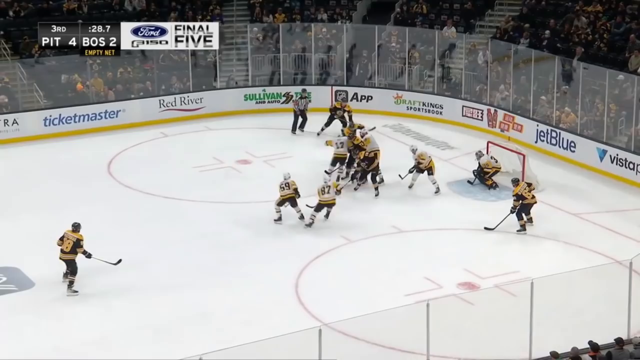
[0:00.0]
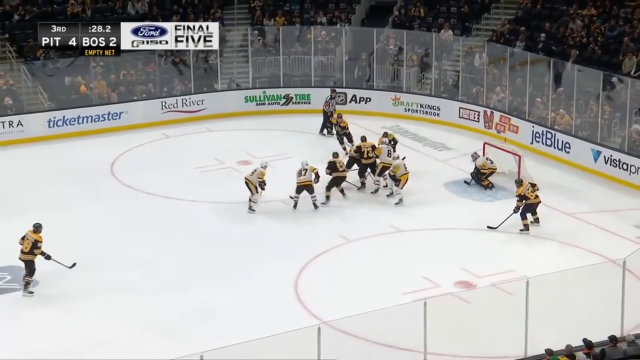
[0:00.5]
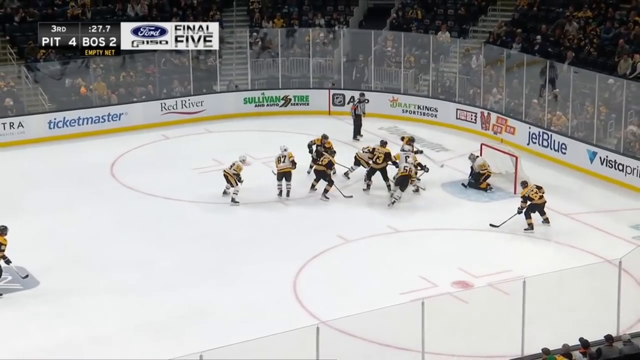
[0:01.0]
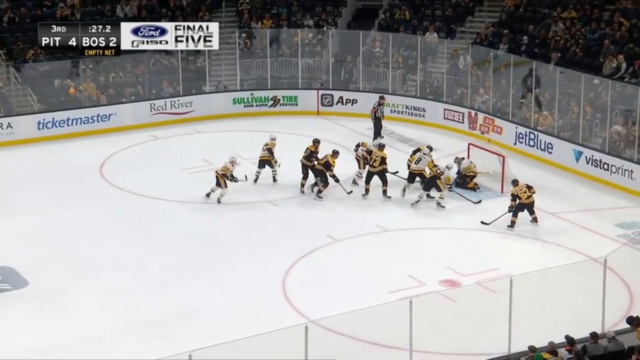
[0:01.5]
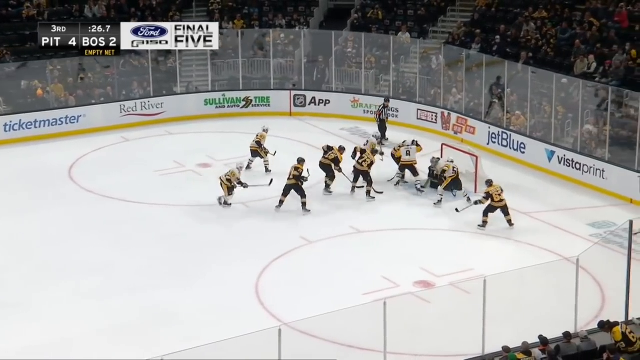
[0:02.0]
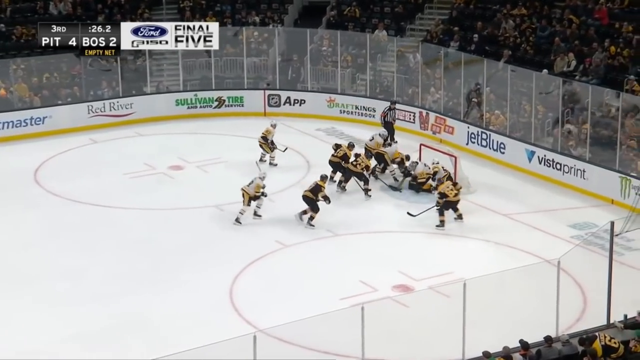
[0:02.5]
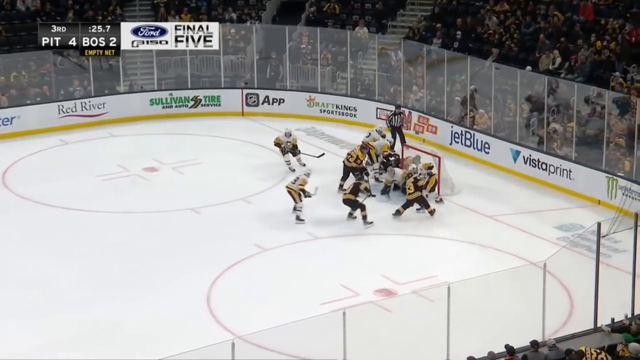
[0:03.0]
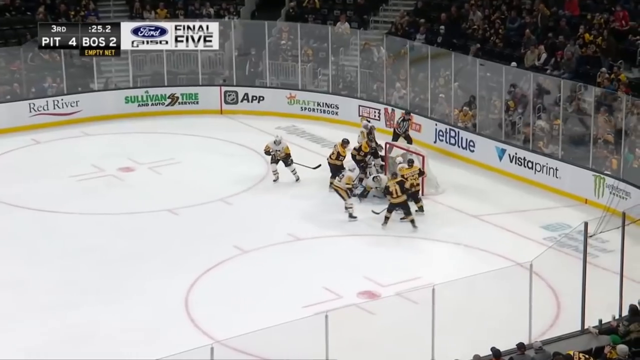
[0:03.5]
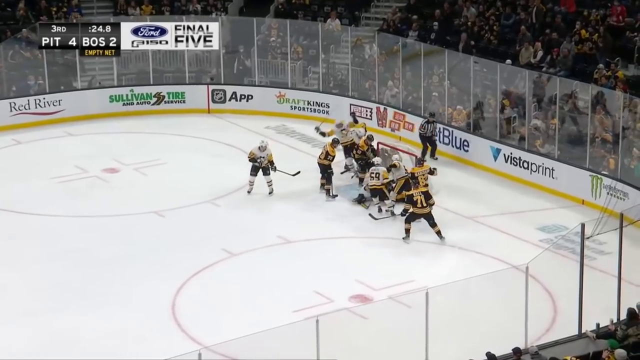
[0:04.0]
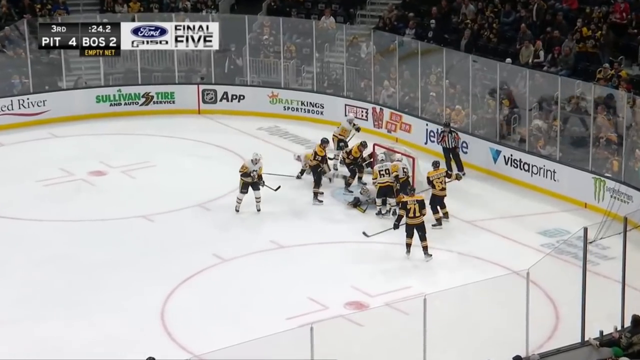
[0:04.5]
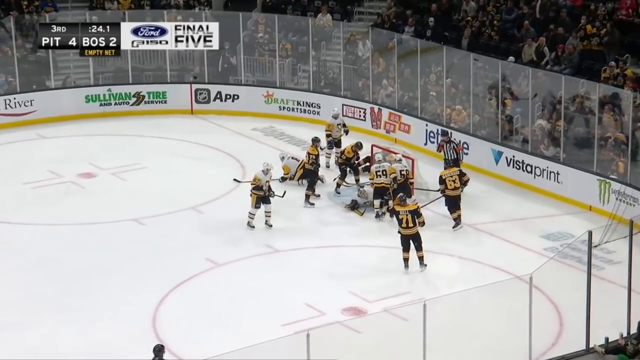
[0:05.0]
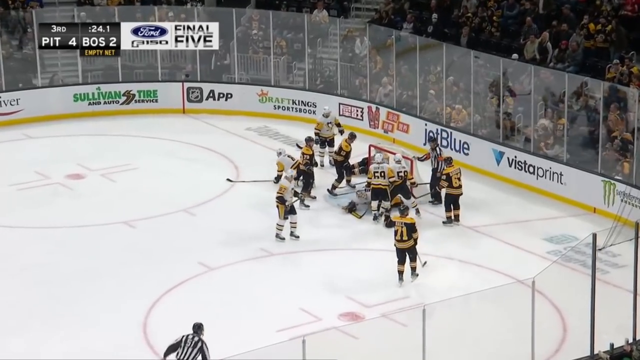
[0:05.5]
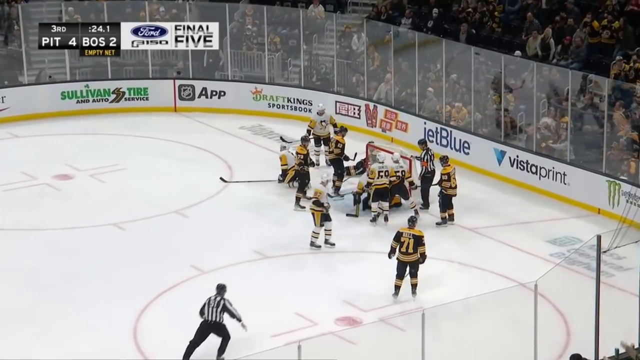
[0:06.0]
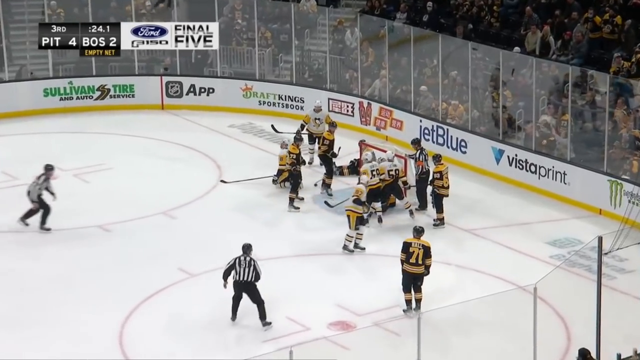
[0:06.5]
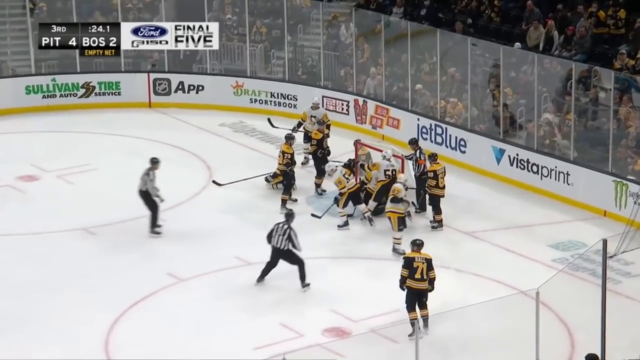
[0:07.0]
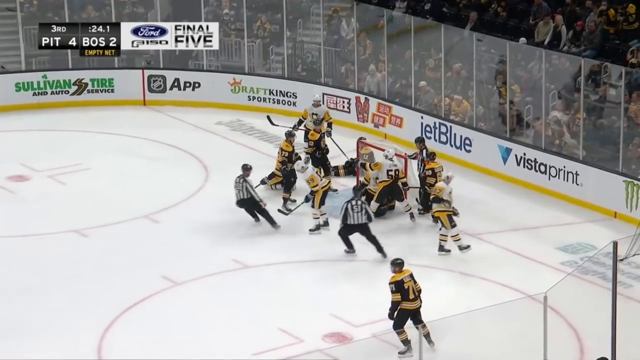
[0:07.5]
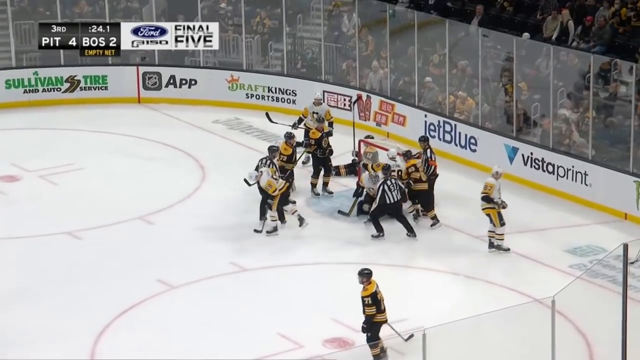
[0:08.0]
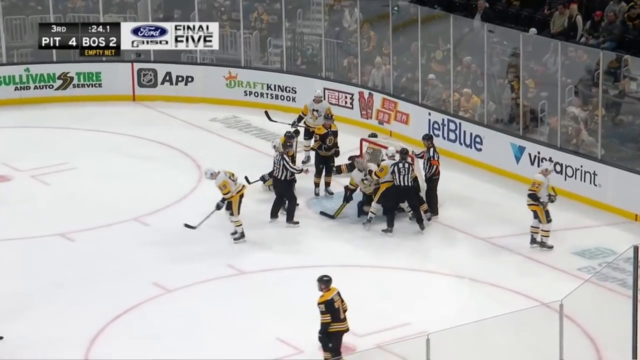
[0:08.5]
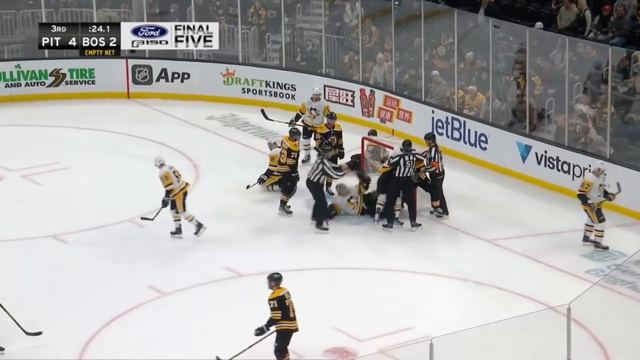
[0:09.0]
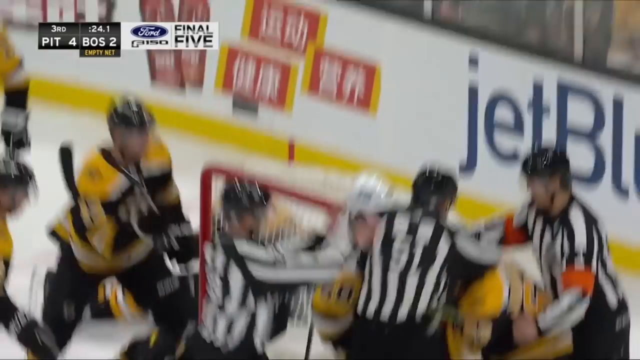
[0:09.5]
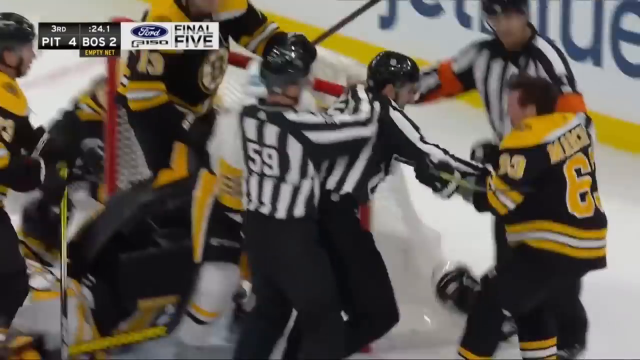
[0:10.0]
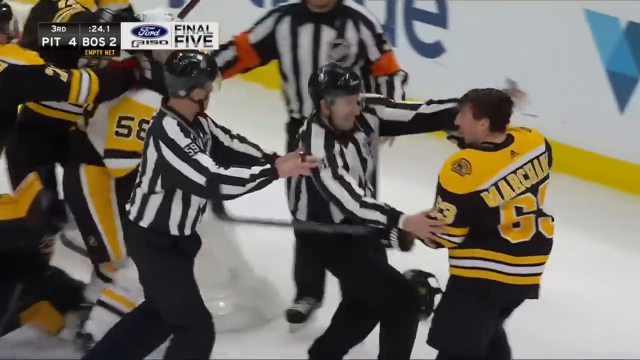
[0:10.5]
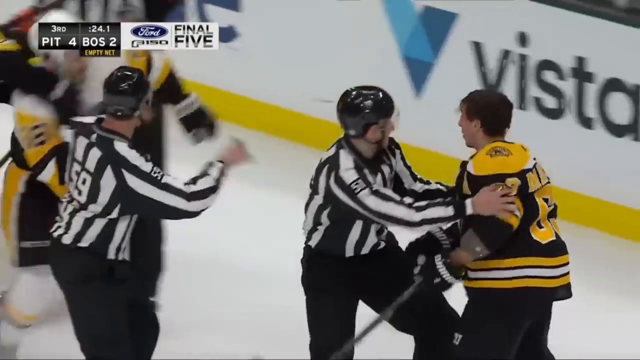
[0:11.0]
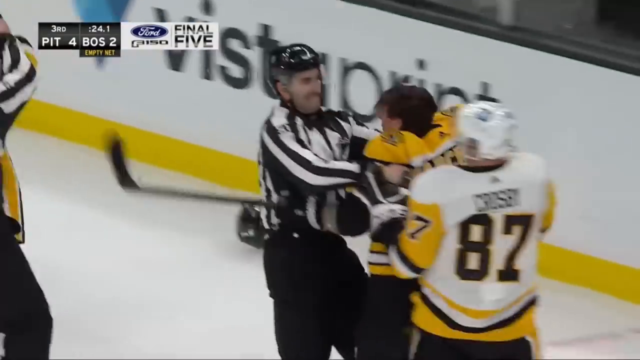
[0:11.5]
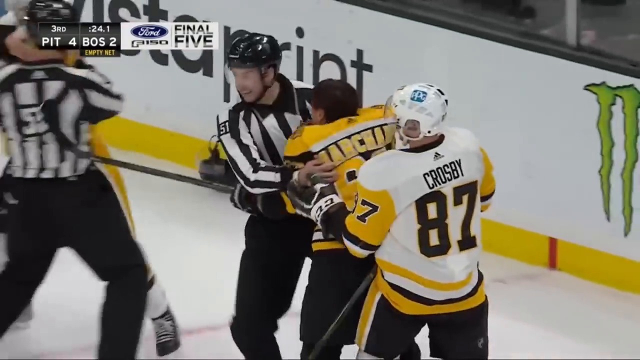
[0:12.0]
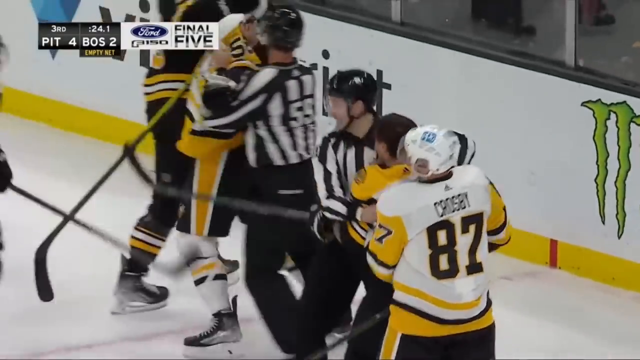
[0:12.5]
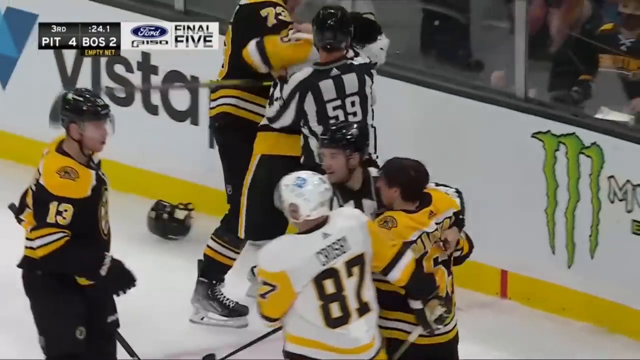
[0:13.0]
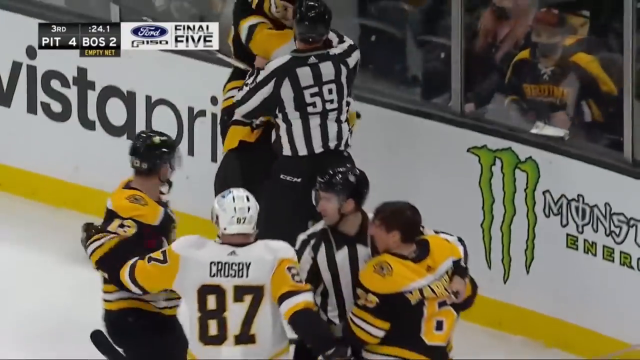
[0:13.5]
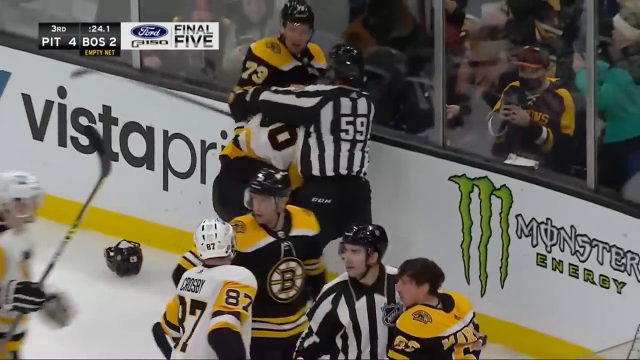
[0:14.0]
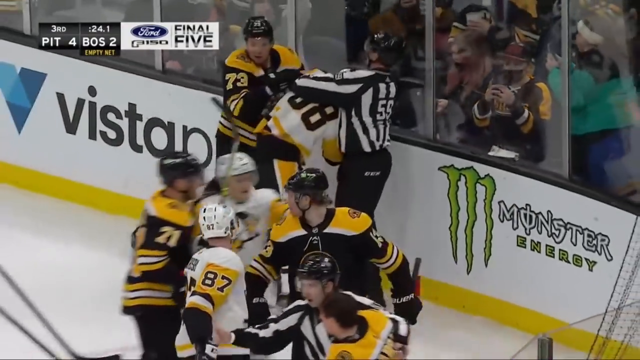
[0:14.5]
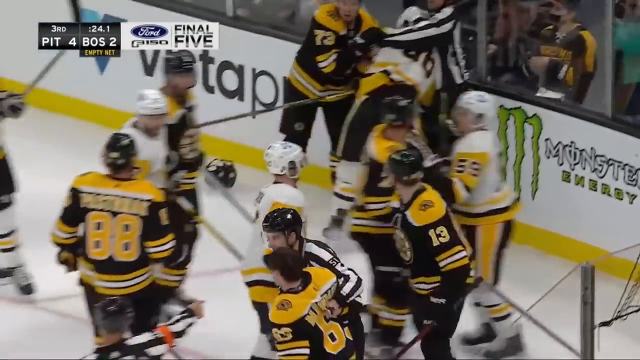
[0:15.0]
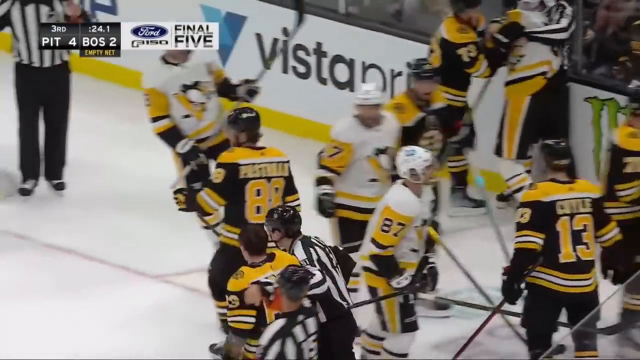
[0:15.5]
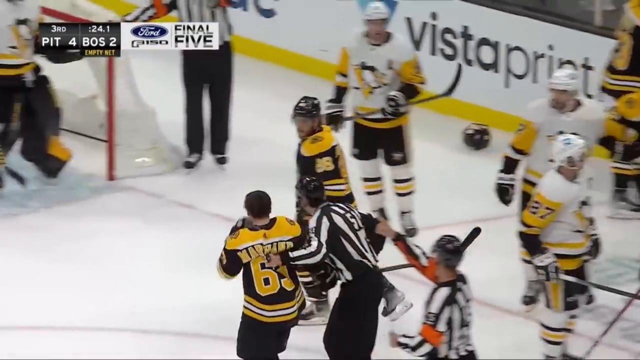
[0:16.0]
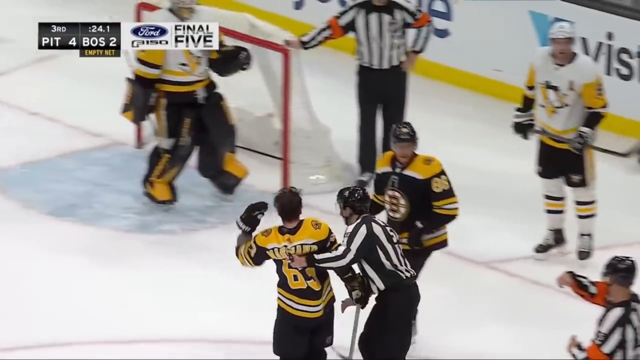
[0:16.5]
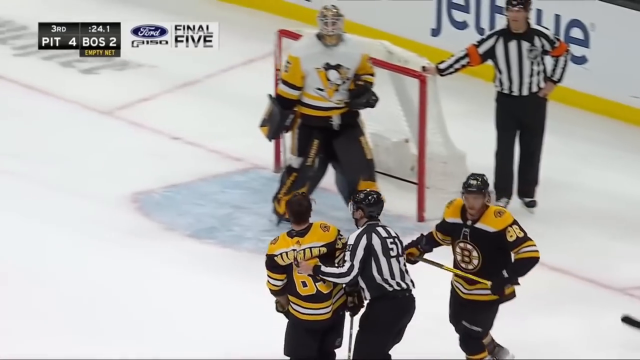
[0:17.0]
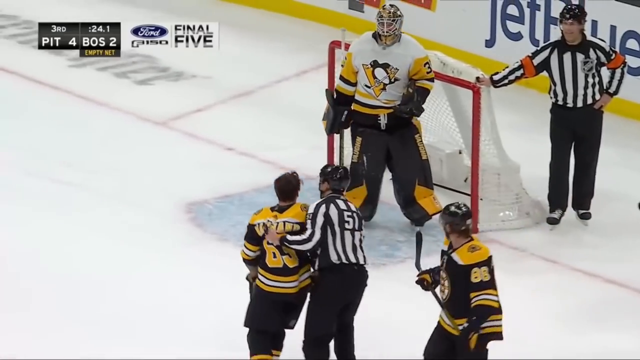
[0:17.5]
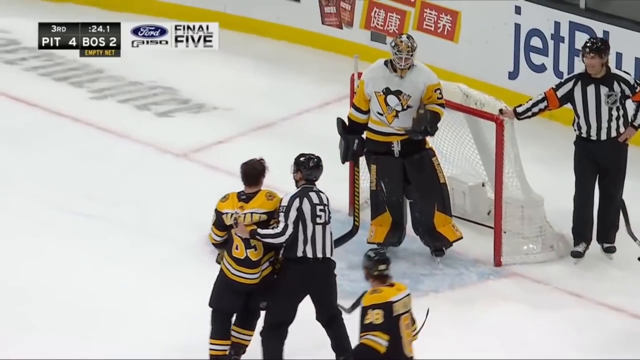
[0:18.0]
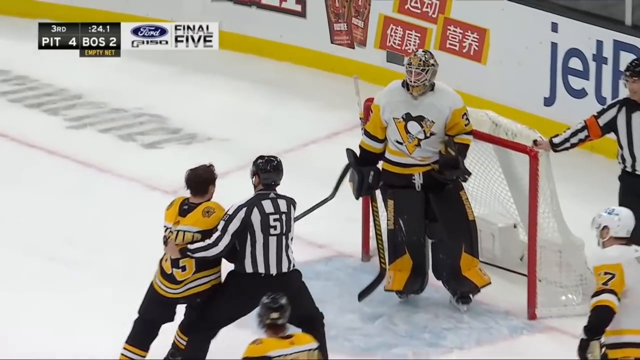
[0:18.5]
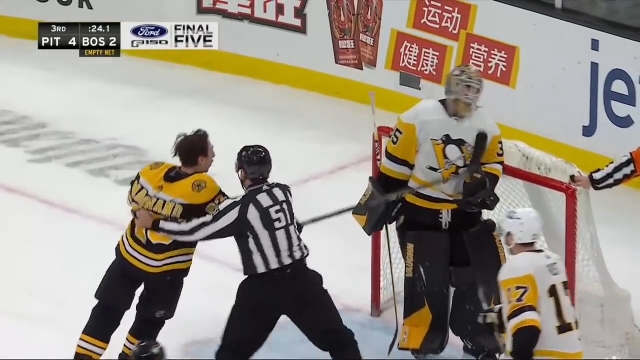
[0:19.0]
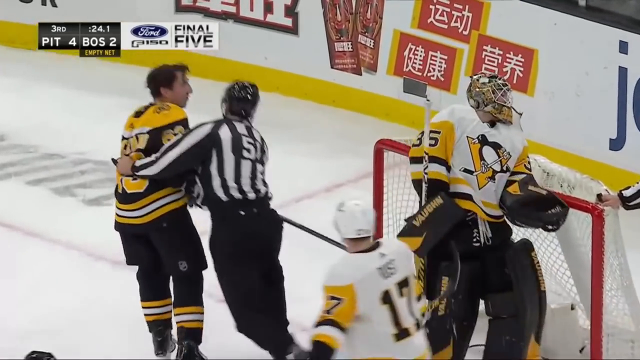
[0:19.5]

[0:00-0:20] An ice hockey match is underway between teams PIT and BOS, one of which is possibly Pittsburgh. The score is 4-2 to PIT, the game is in the third quarter, and 26.4 seconds remain. The BOS net is empty, presumably because they have put on an extra attacker to try to get back into the game. The game is sponsored by Ford Fizo Final 5, likely some sort of vehicle. Around the outside of the rink are sponsor boards for Vistaprint, JetBlue, DraftKings, App, Sullivan Tyres, Red River, Ticketmaster, and one that cannot be read. Above the boards are plastic shields that protect the crowd from the puck, and the ice has typical ice hockey markings.